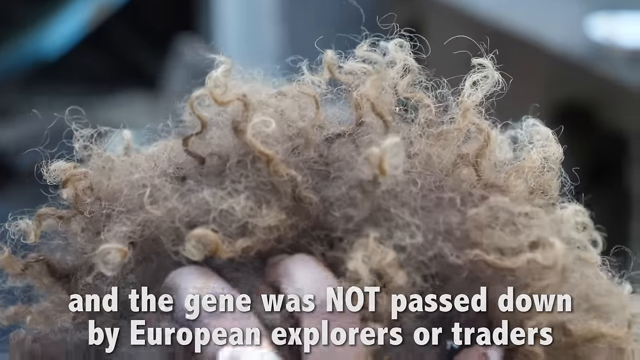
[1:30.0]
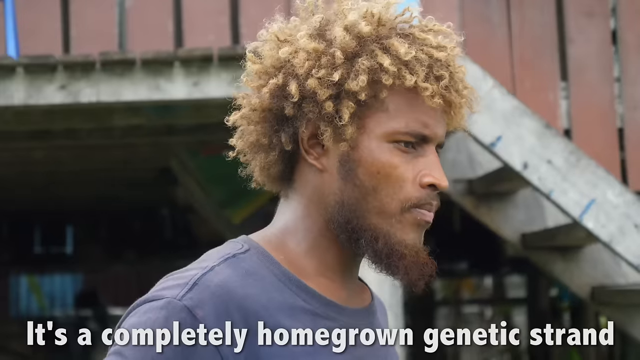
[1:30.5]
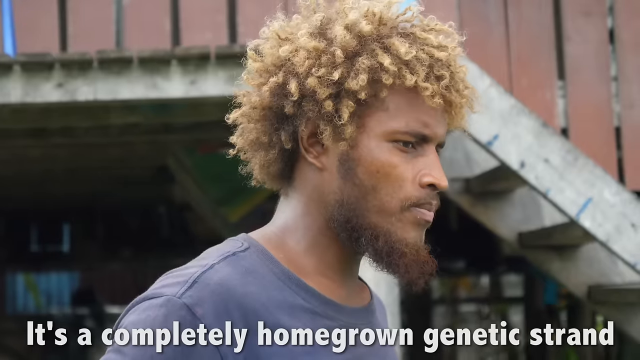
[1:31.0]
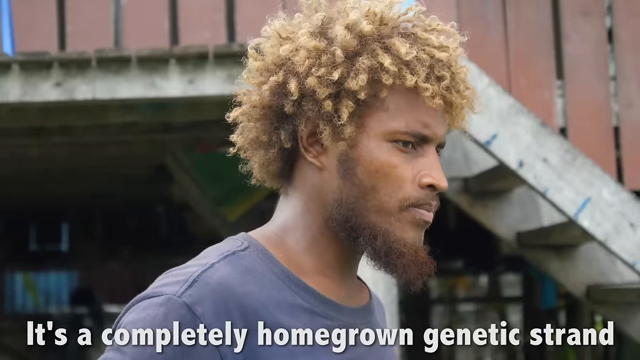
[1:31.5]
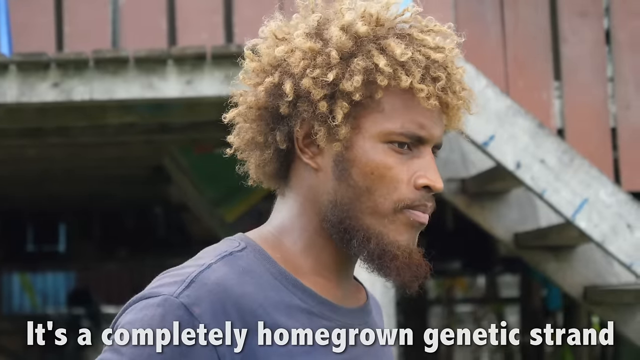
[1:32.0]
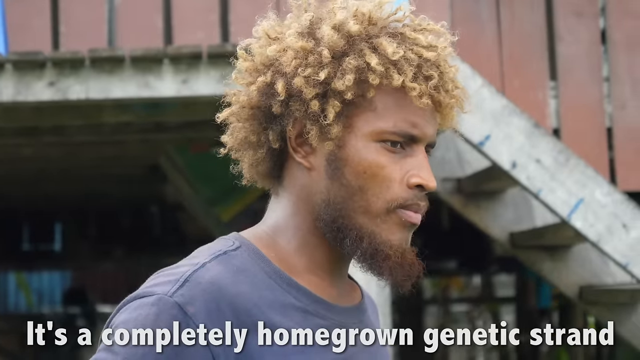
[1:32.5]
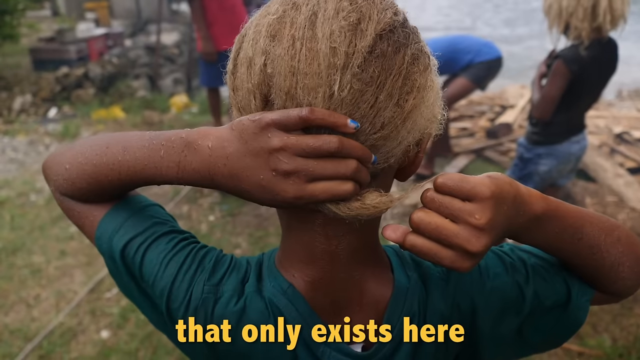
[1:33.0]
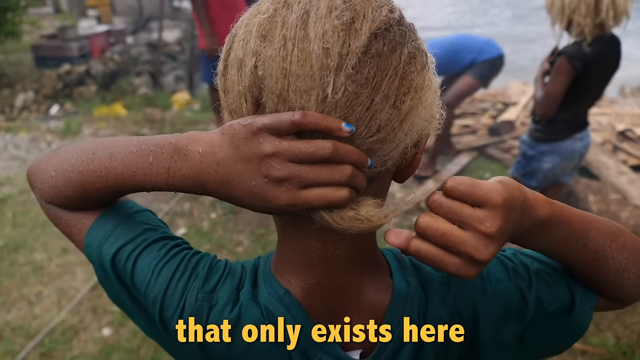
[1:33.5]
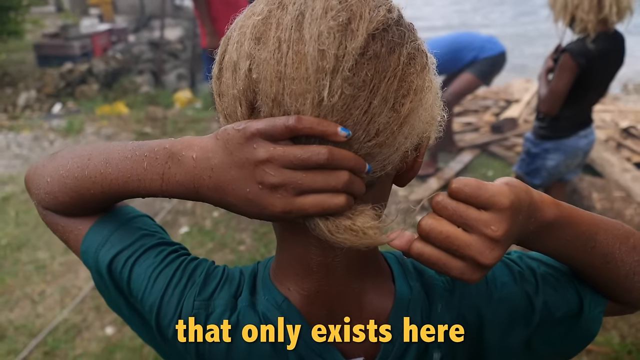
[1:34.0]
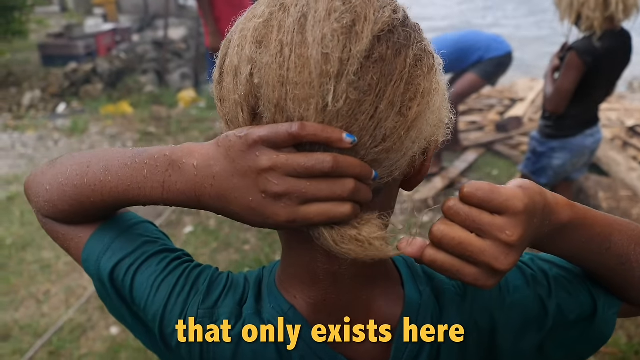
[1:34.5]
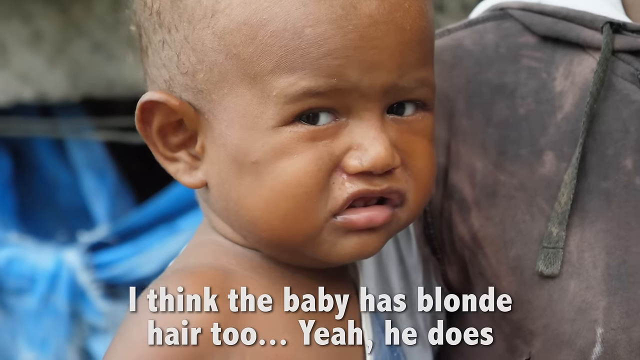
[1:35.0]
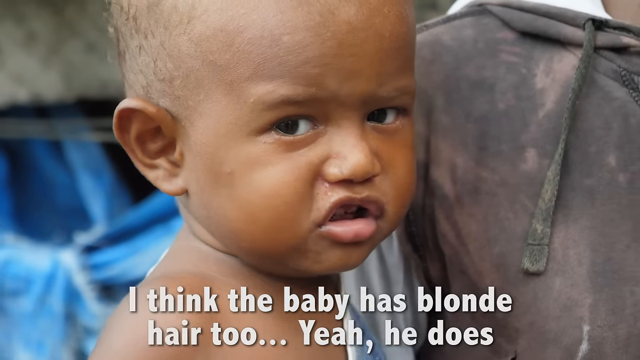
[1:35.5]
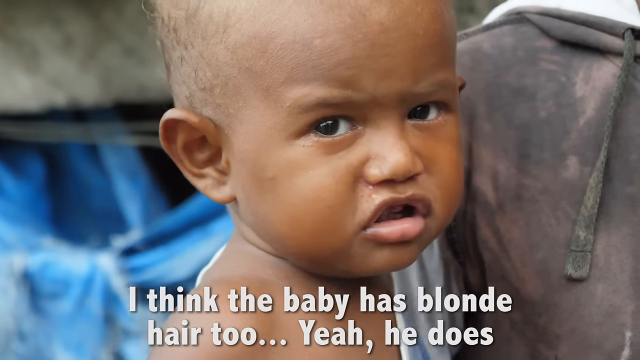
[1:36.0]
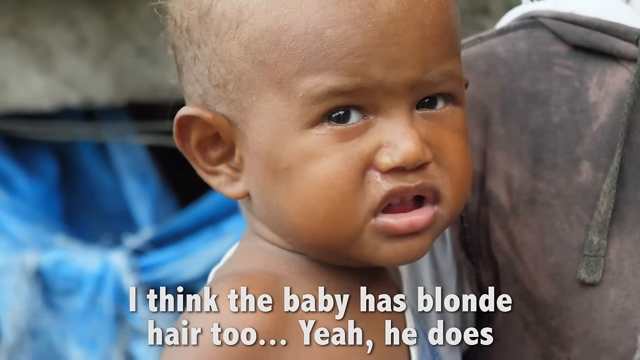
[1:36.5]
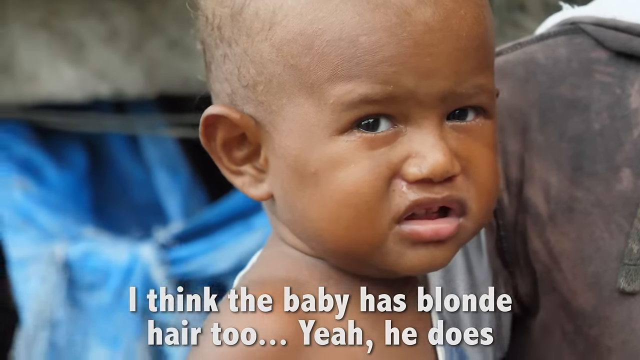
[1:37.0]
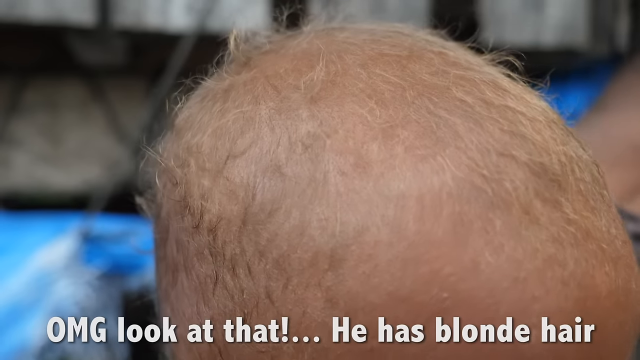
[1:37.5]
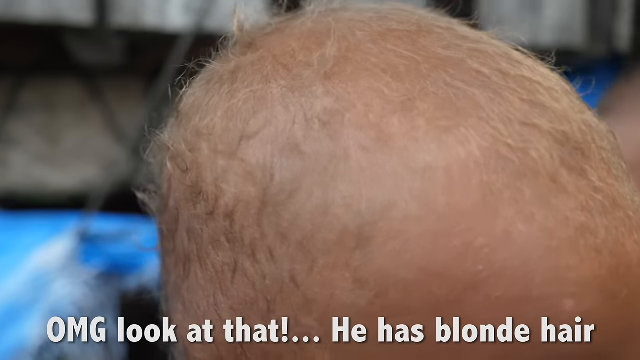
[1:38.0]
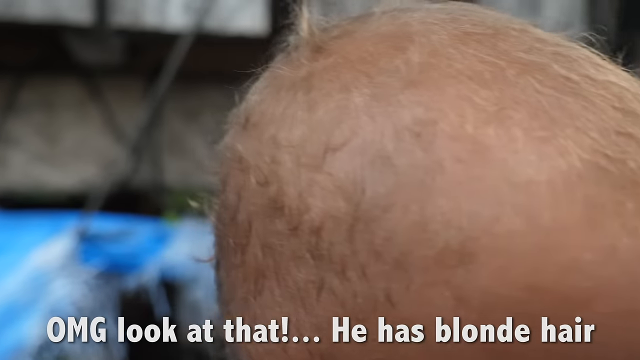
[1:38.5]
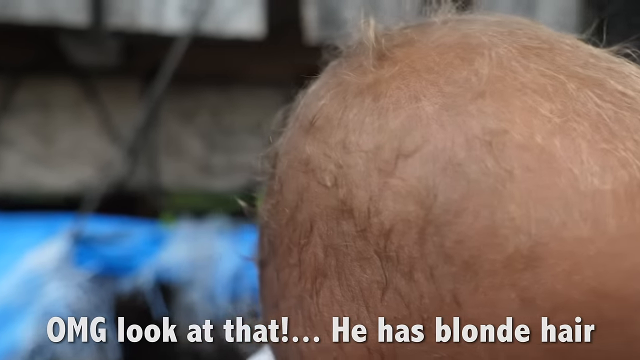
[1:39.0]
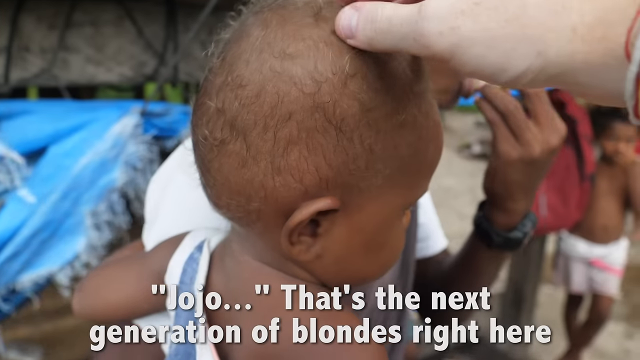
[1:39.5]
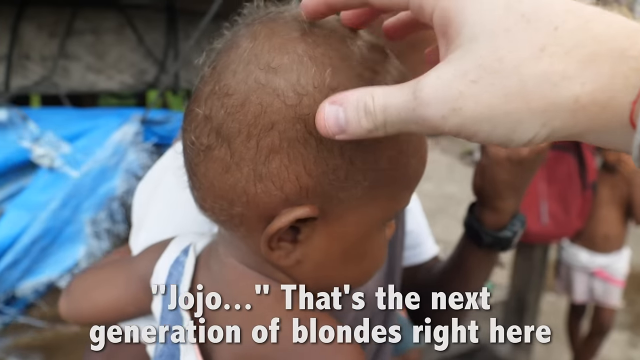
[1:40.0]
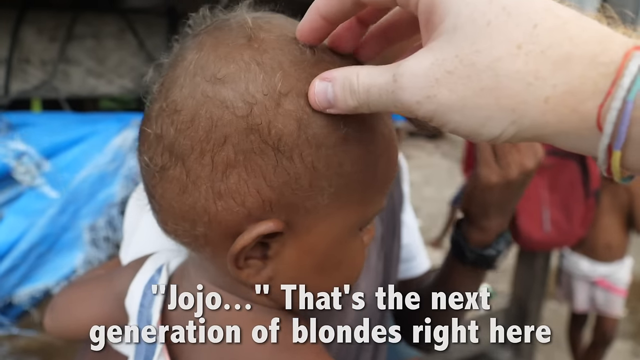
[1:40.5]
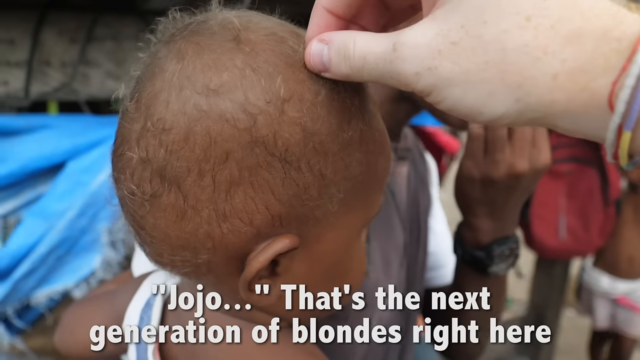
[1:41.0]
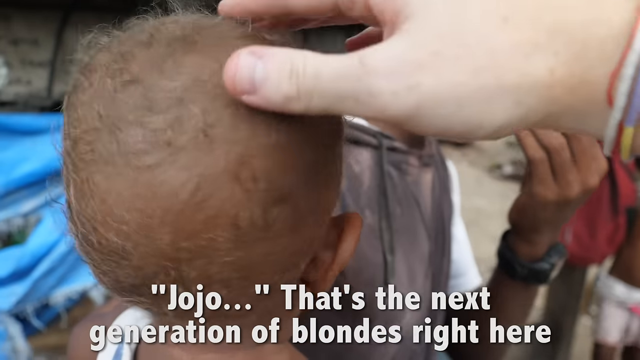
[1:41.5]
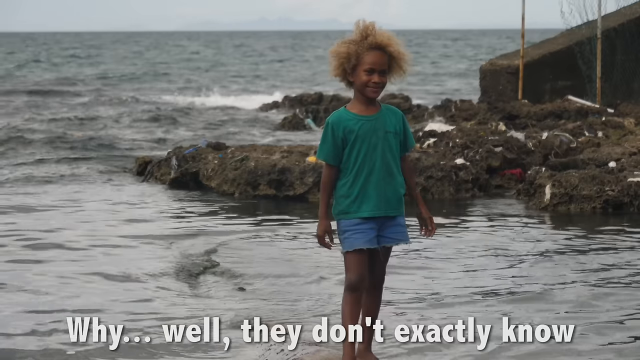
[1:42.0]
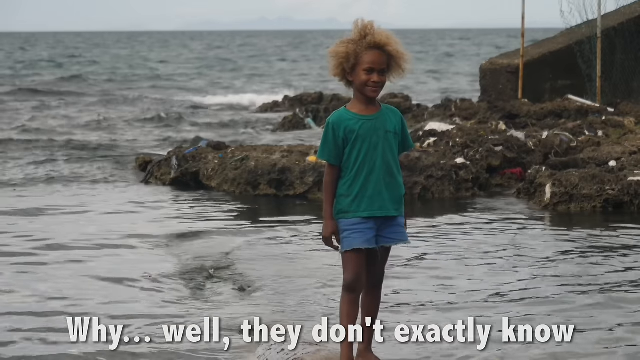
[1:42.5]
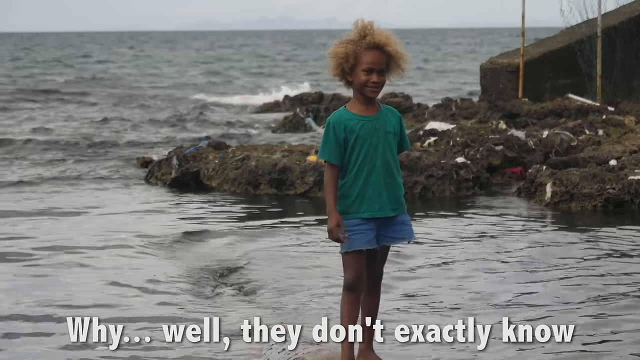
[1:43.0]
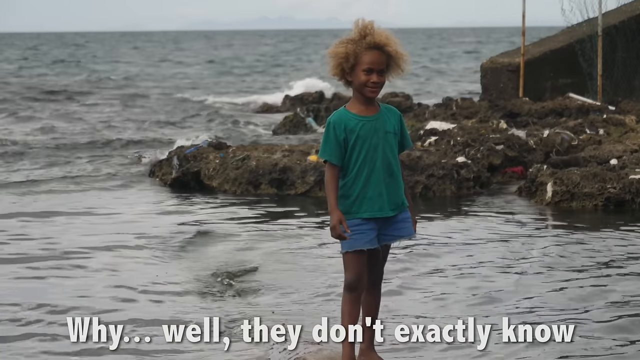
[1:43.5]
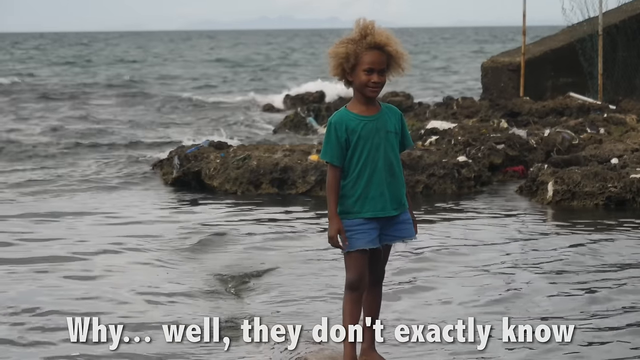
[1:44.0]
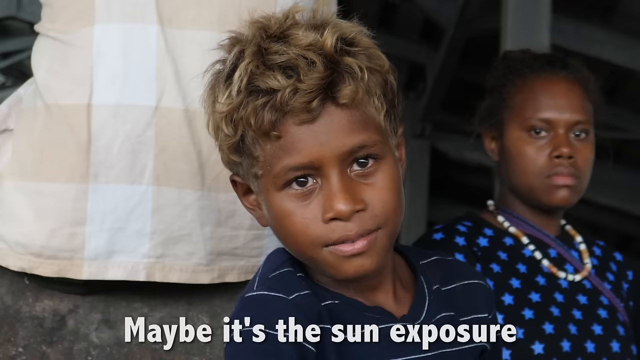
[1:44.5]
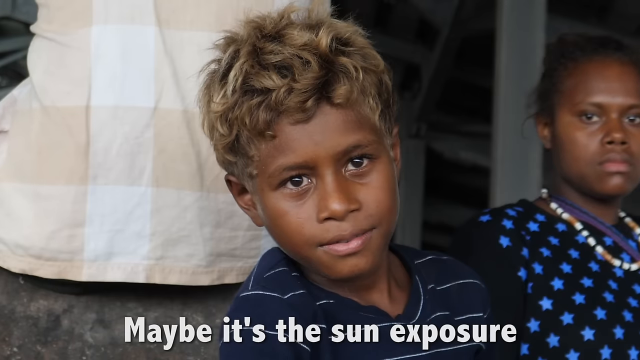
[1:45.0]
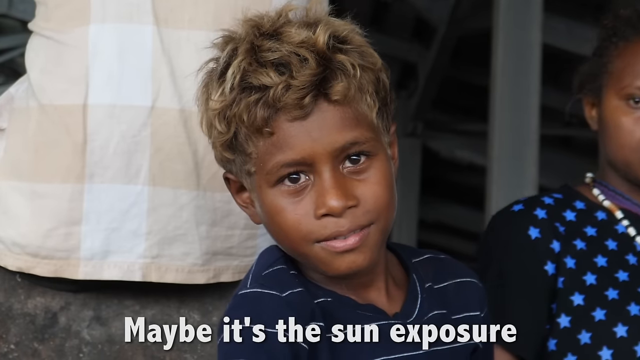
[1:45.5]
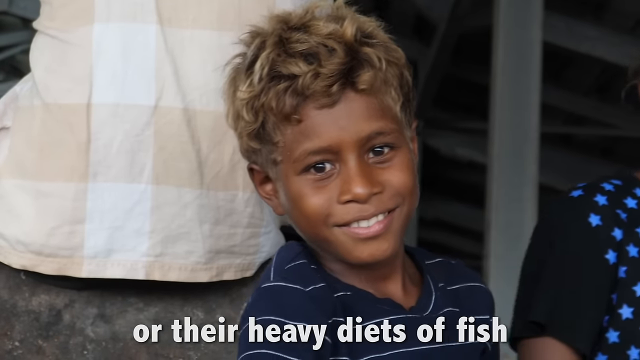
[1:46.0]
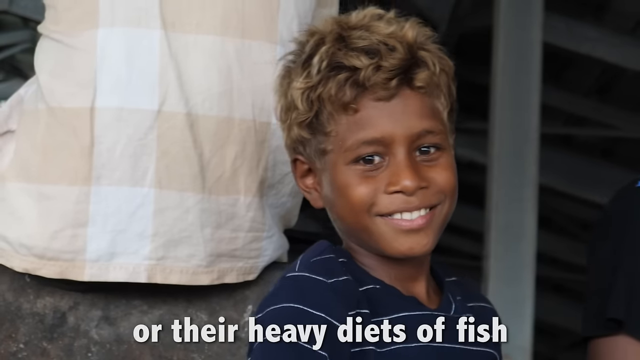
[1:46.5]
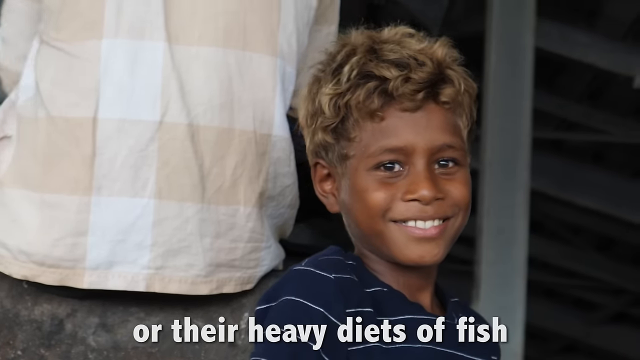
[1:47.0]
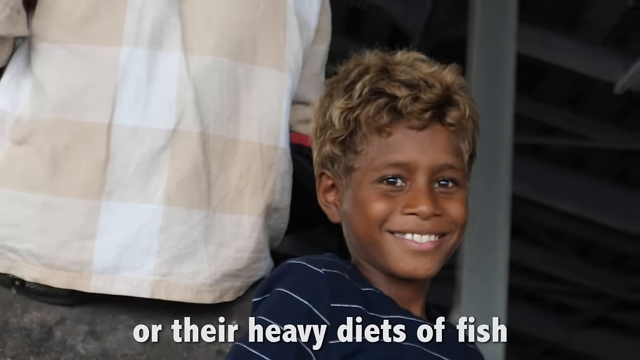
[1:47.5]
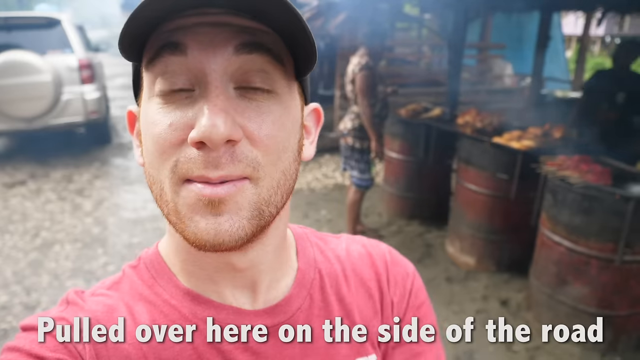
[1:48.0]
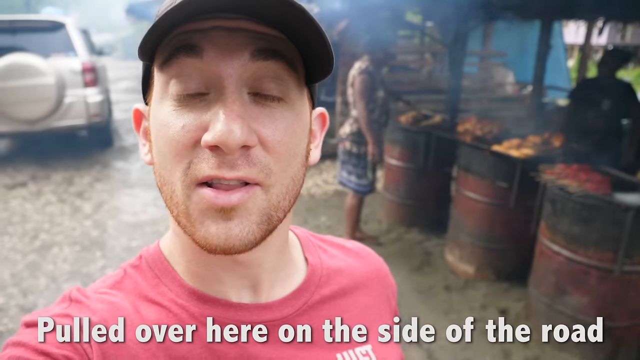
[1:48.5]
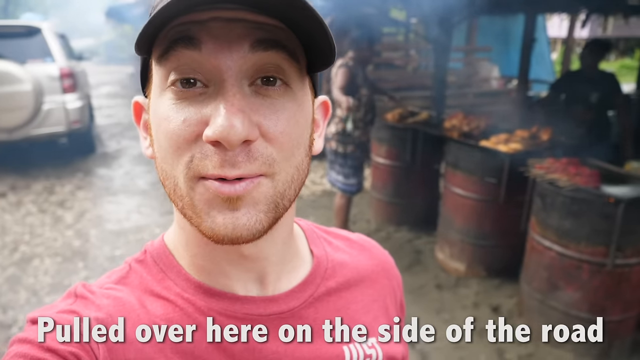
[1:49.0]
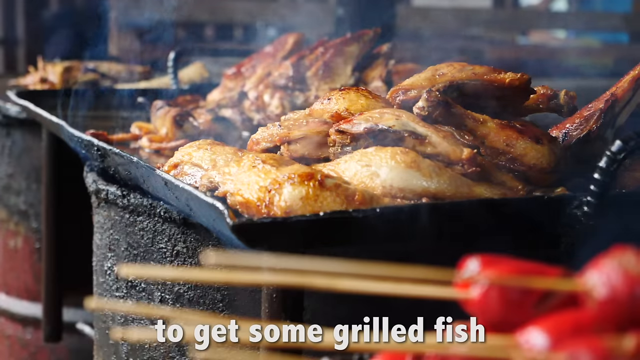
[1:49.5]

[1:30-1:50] Babies are shown as the next generation of blonde people on the islands. Not all of the locals have blonde hair; some have ordinary brown hair, while others have curly blonde hair.